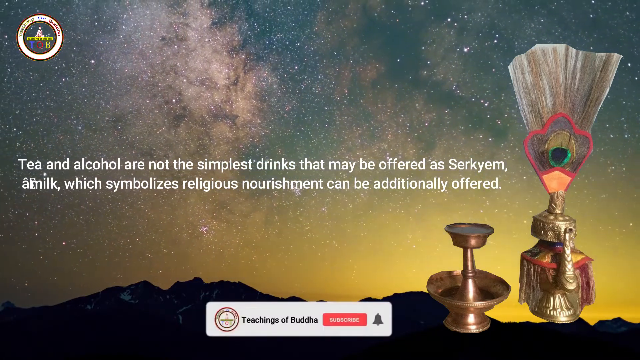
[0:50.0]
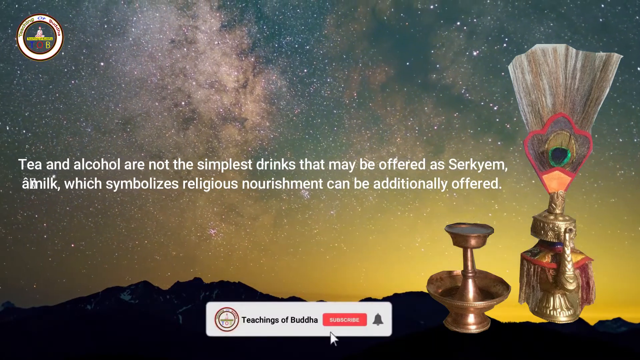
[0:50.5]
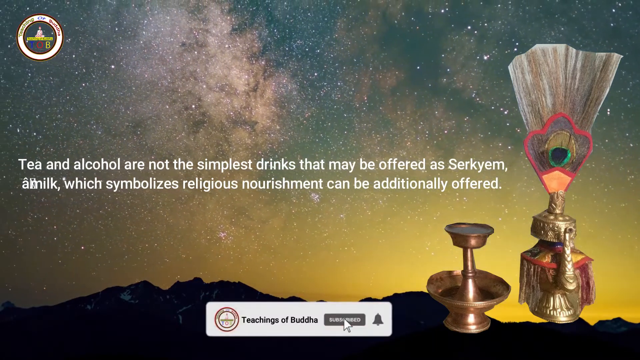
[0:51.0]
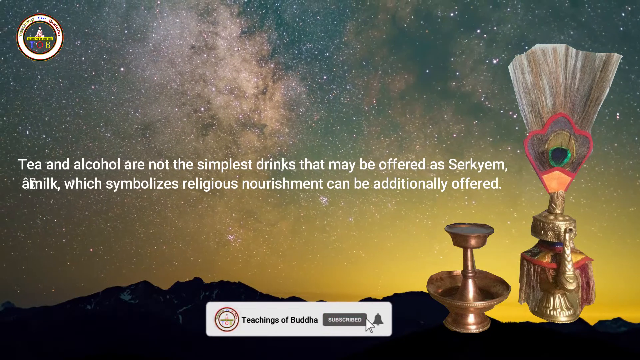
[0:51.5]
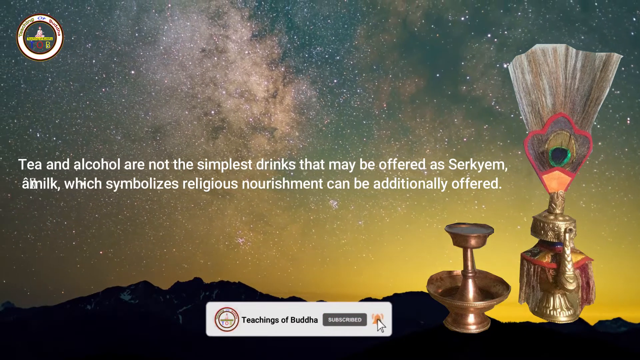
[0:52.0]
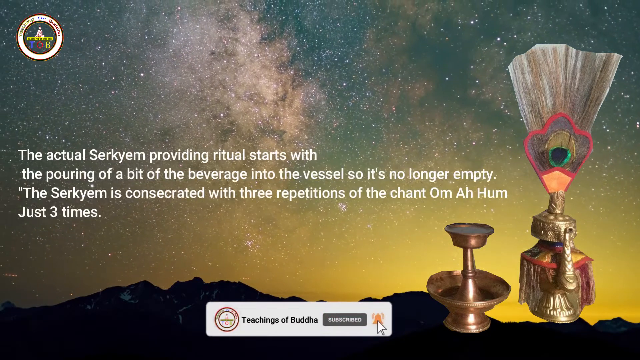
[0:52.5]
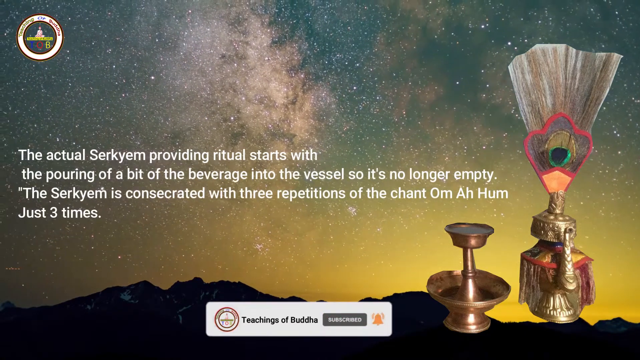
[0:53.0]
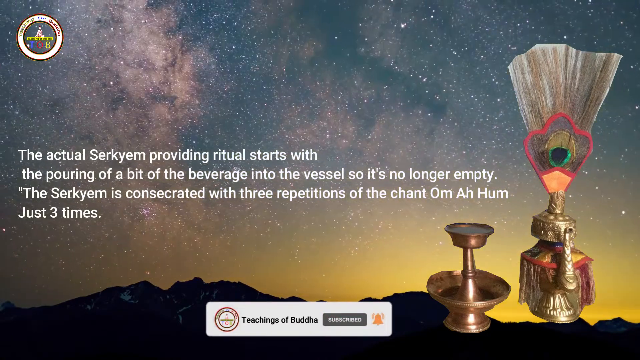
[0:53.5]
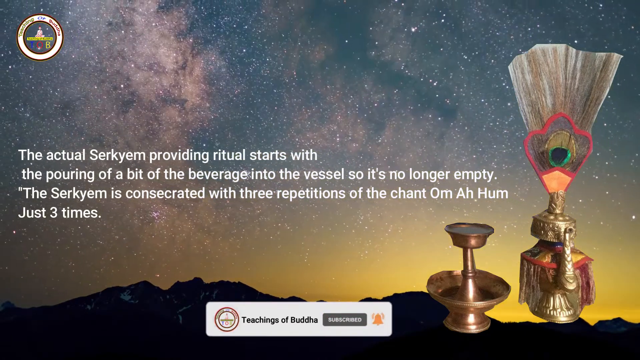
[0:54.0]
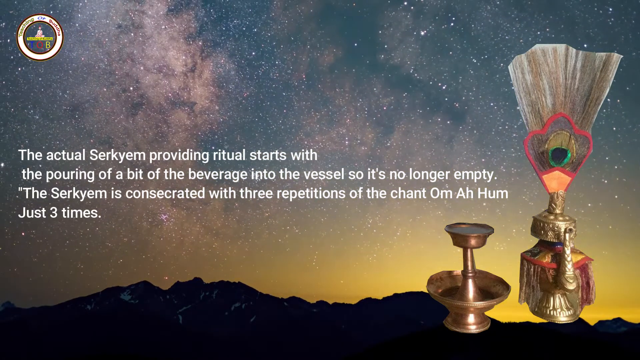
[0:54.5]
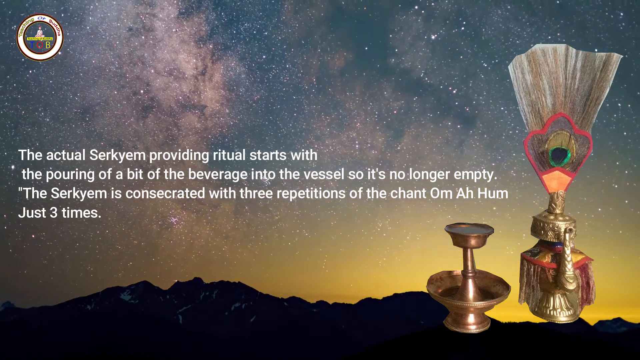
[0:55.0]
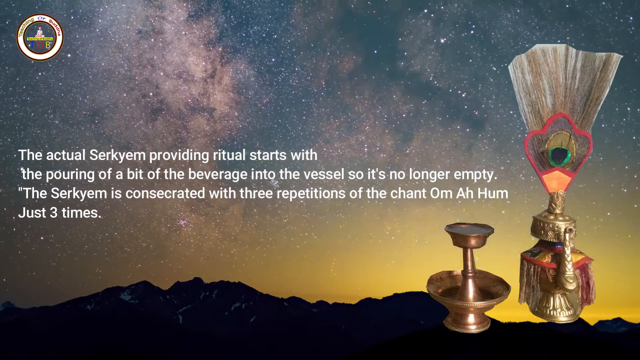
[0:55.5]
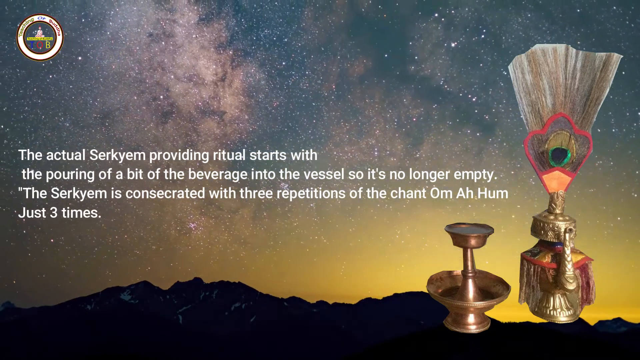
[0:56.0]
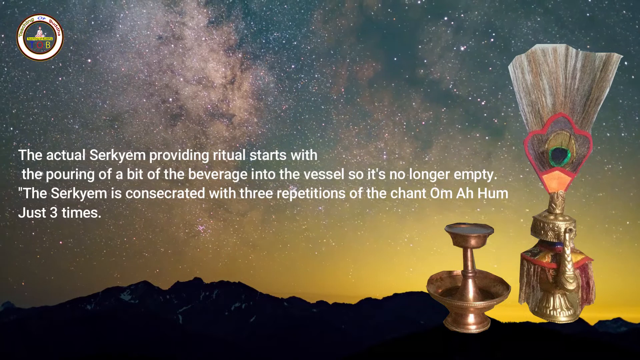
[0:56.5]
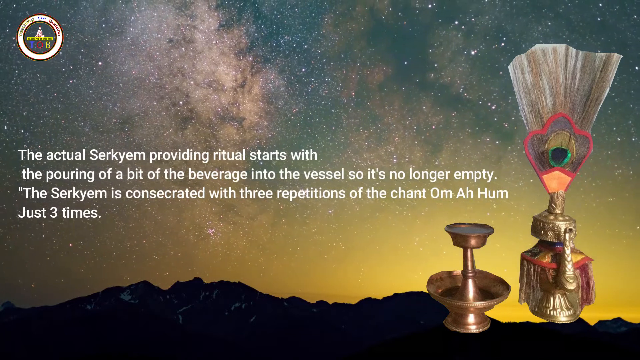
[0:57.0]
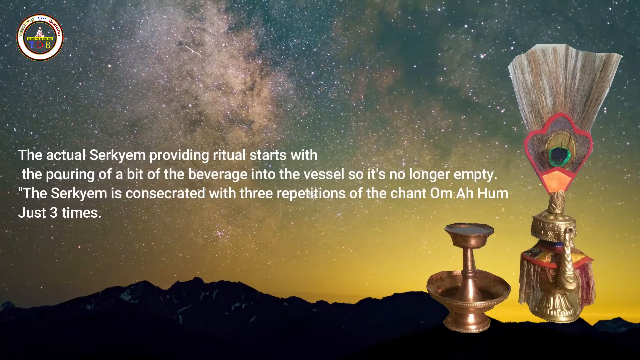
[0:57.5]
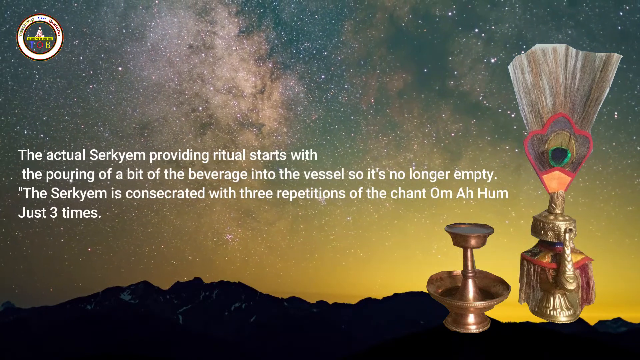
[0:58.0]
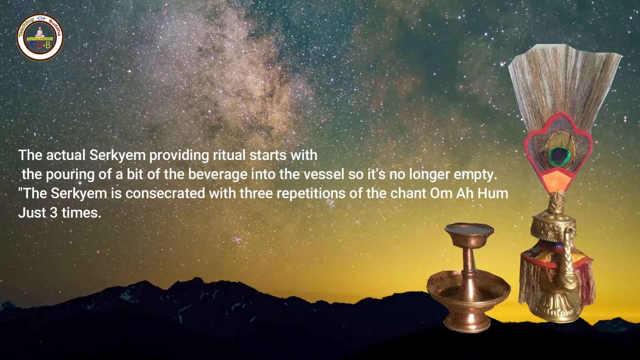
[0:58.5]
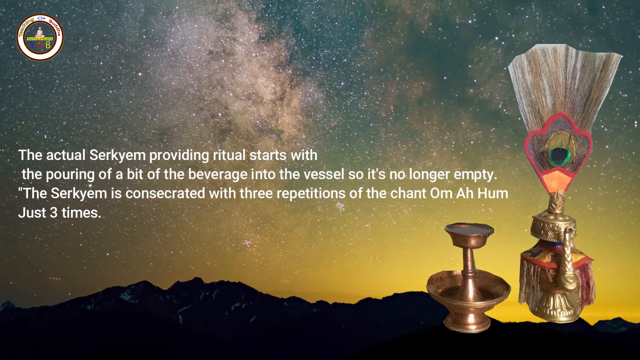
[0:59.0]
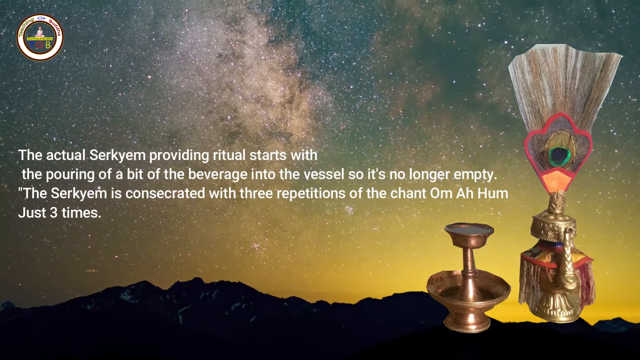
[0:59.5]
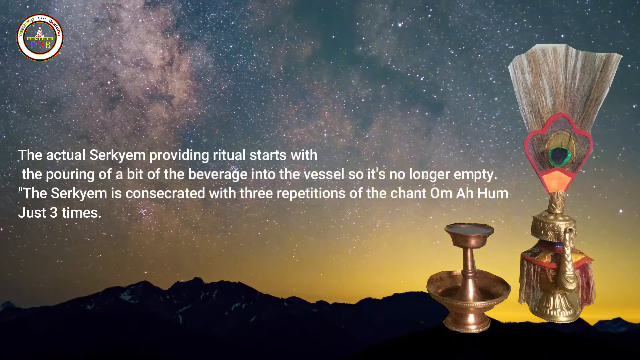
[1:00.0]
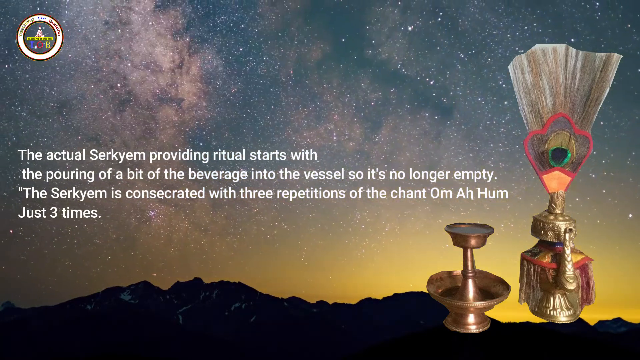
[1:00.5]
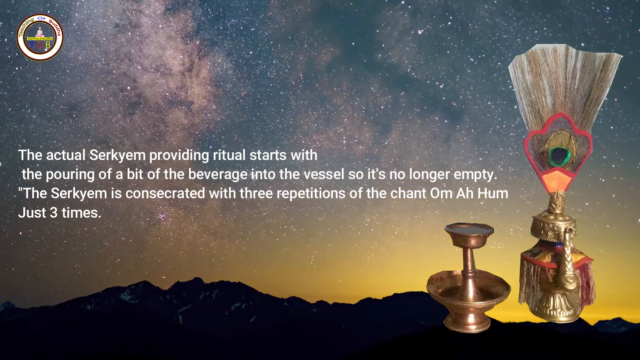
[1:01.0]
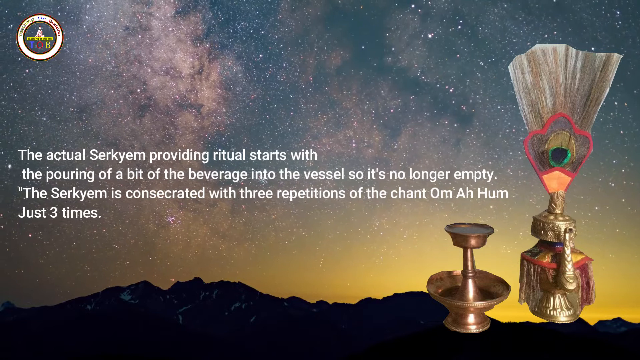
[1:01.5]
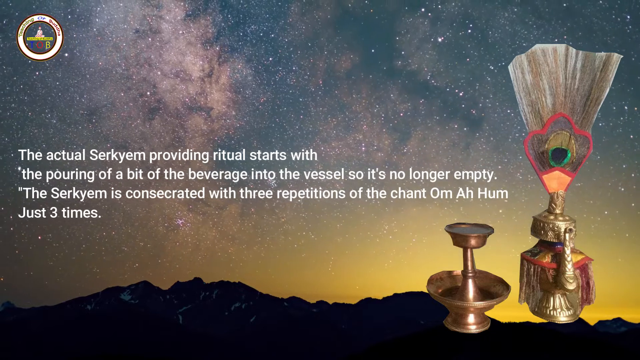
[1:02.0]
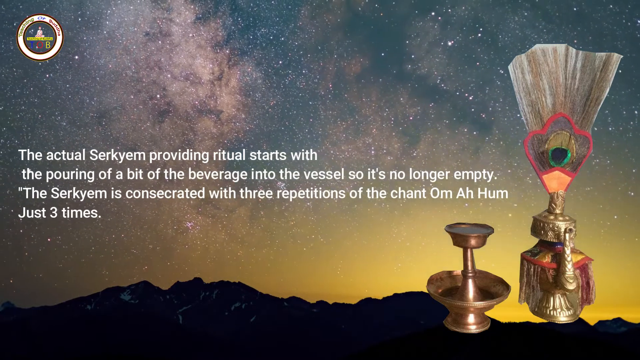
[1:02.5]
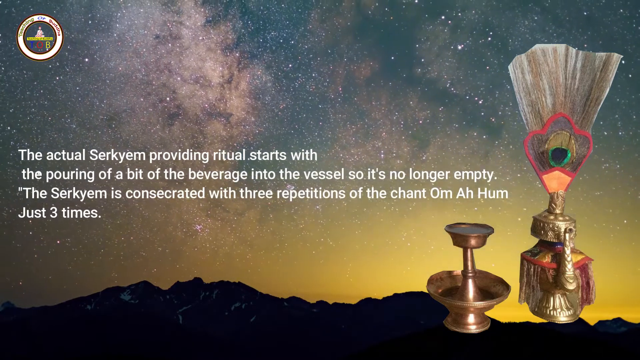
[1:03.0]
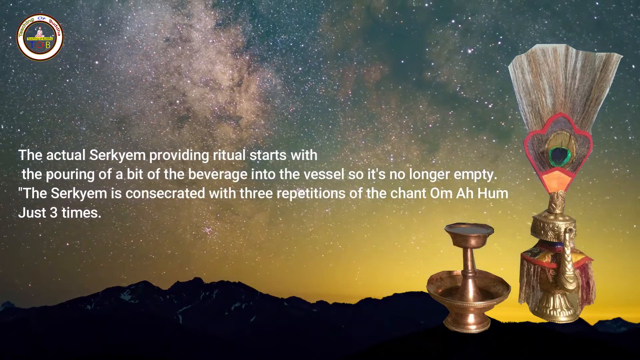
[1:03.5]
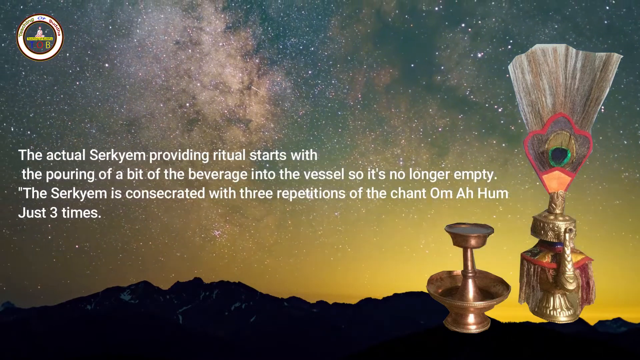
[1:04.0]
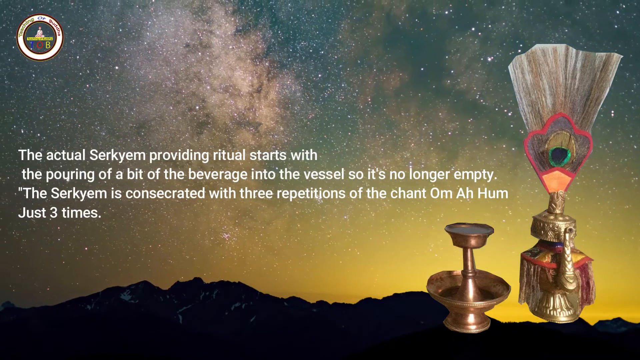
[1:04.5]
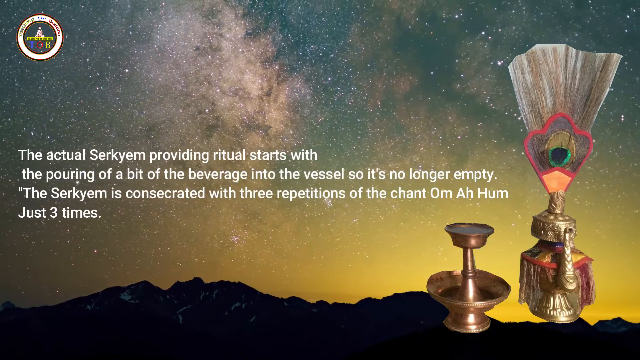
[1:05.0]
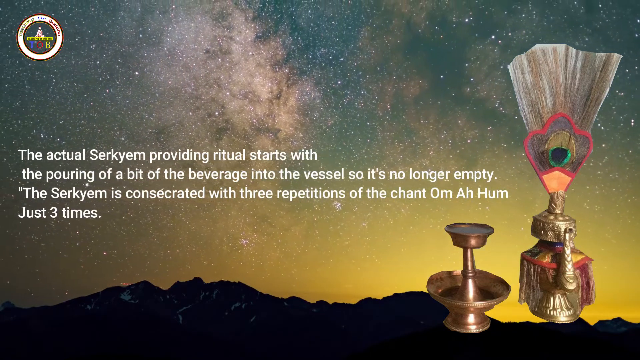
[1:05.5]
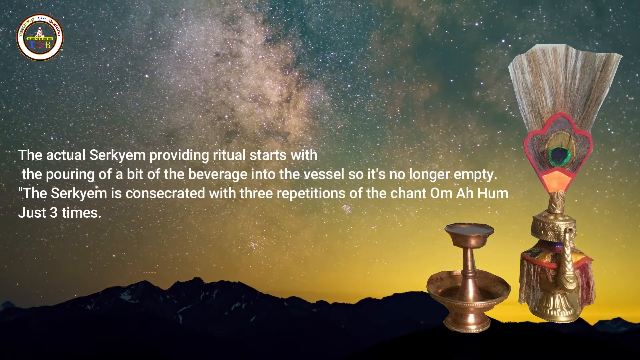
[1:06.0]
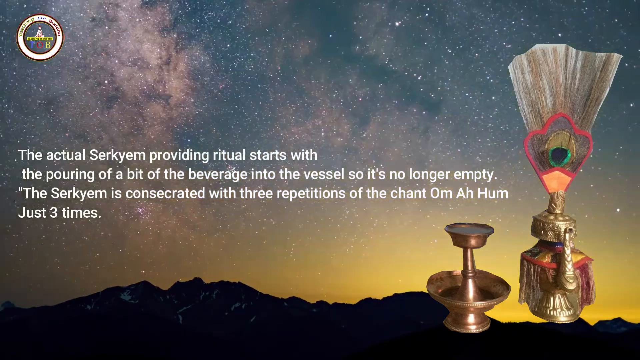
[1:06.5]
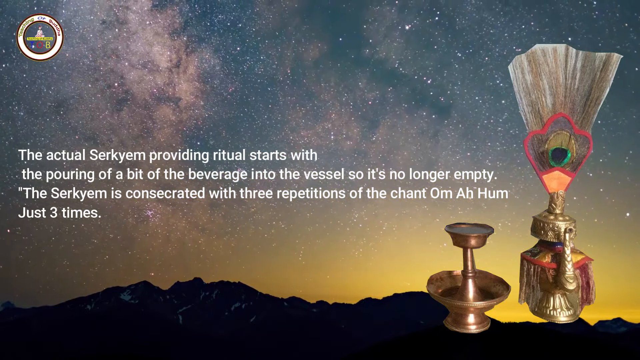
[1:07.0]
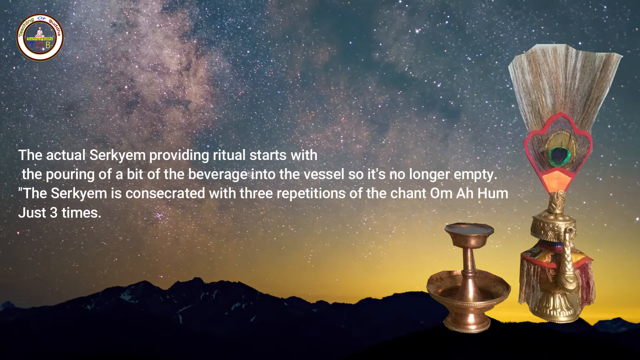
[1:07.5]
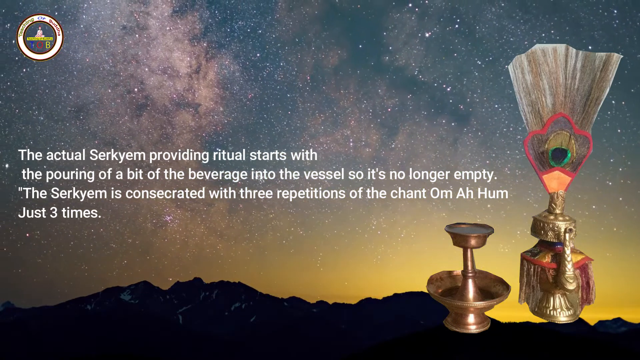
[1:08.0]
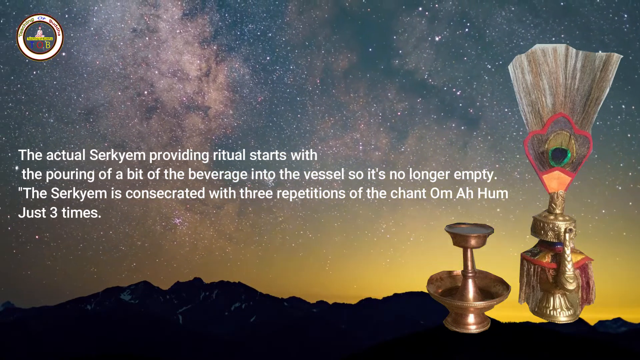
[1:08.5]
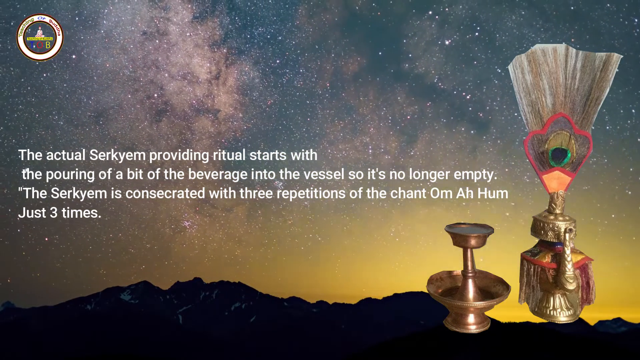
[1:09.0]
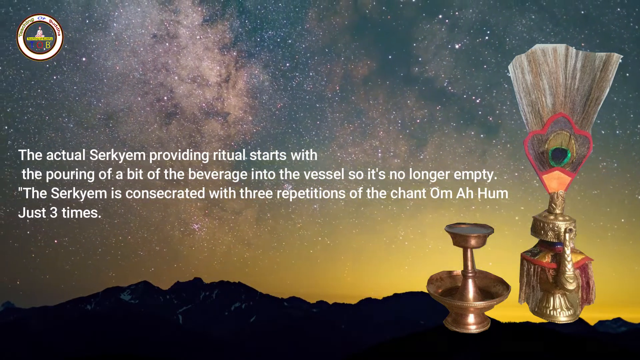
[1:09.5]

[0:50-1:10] A cursor appears over the pop-up bubble at the bottom and clicks the alarm bell, turning it yellow. The text then changes, reading that the actual Serkyem ritual "starts with the pouring of a bit of the beverage into the vessel so that it's no longer empty," and that it "is consecrated with three repetitions of the chant, Om Ah Hum." The sky moves slowly to the right, with some shooting stars in the background. Everything else remains static, including the artifacts on the far right, which look like drinking vessels for religious purposes. Only the text and the nighttime sky change.